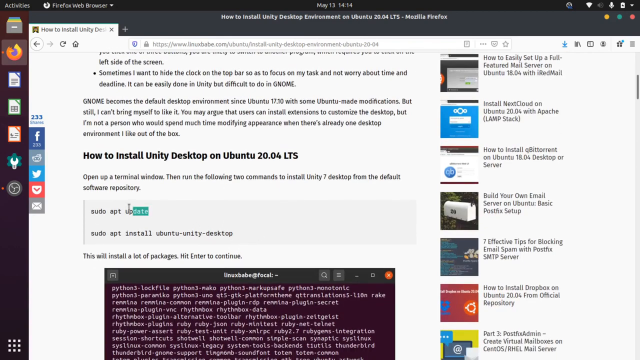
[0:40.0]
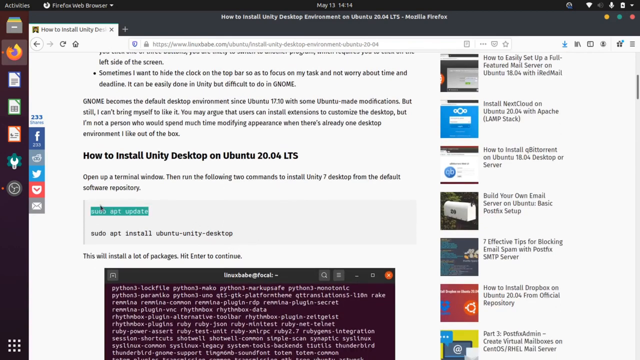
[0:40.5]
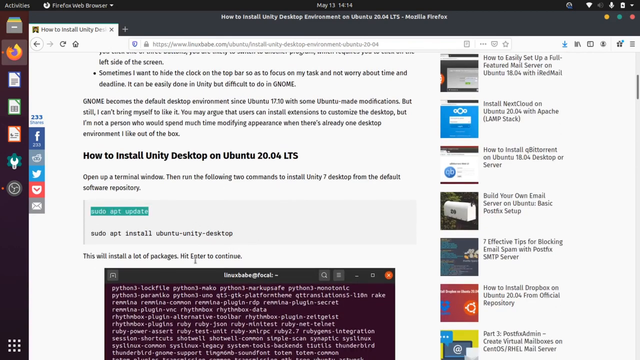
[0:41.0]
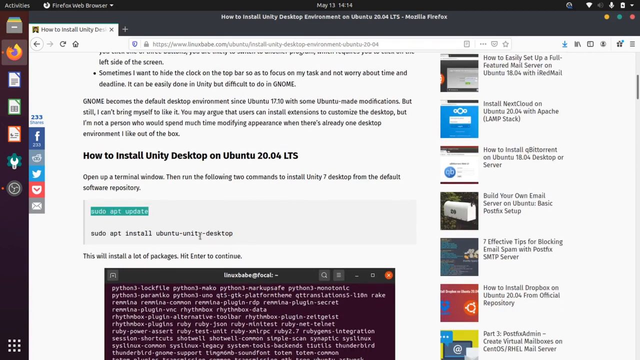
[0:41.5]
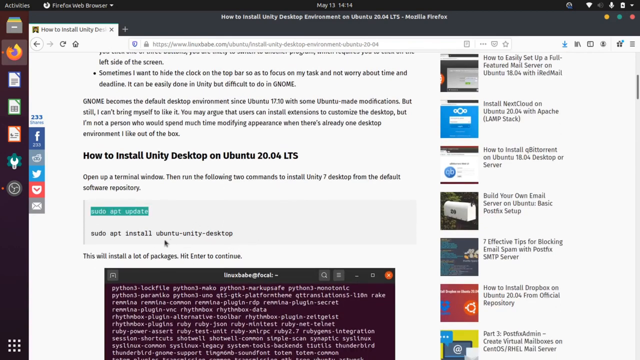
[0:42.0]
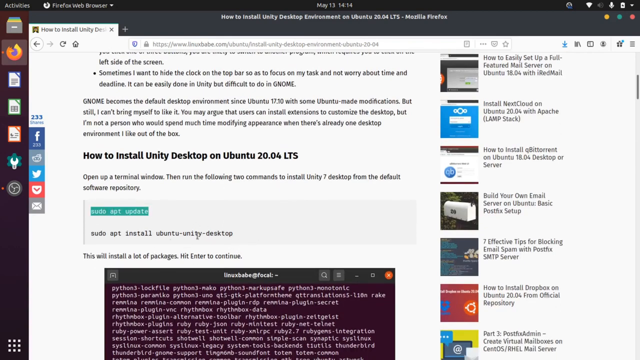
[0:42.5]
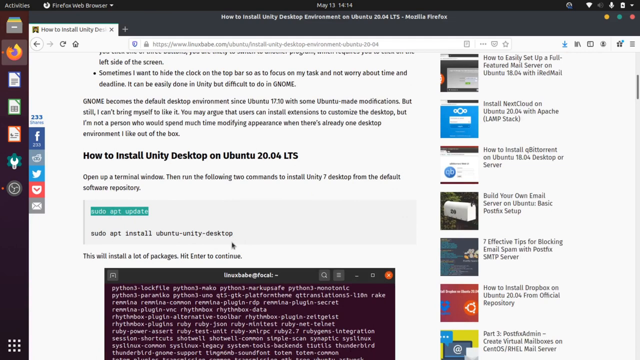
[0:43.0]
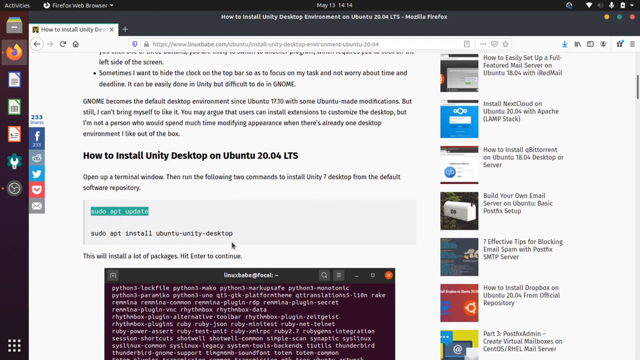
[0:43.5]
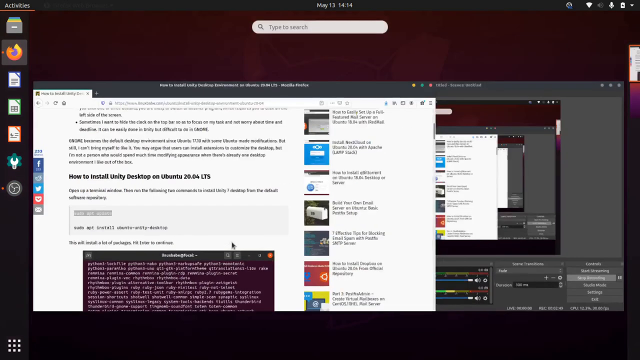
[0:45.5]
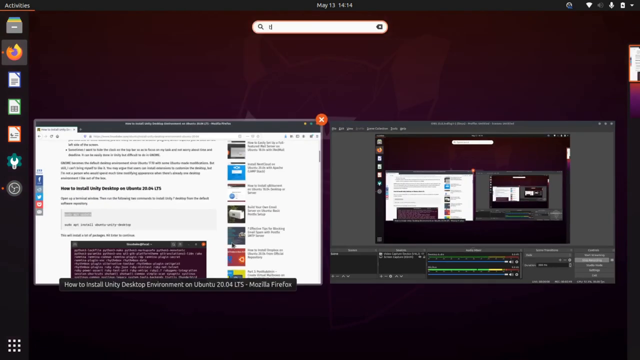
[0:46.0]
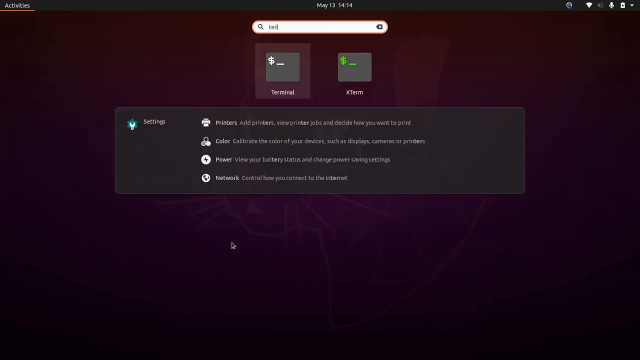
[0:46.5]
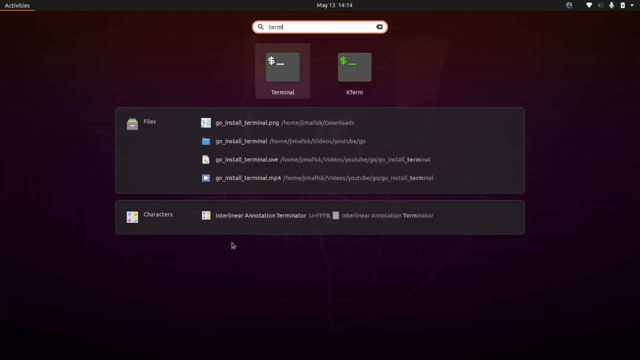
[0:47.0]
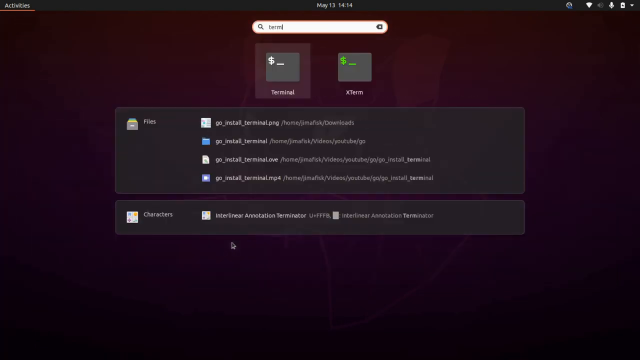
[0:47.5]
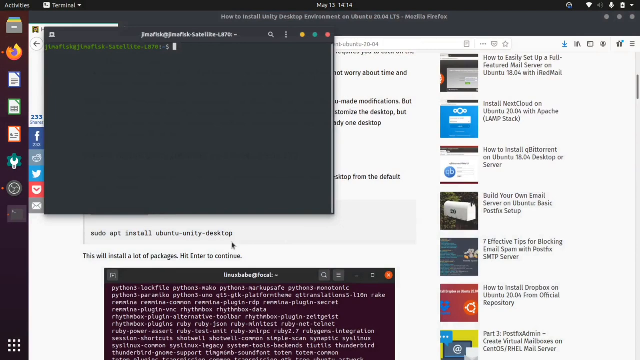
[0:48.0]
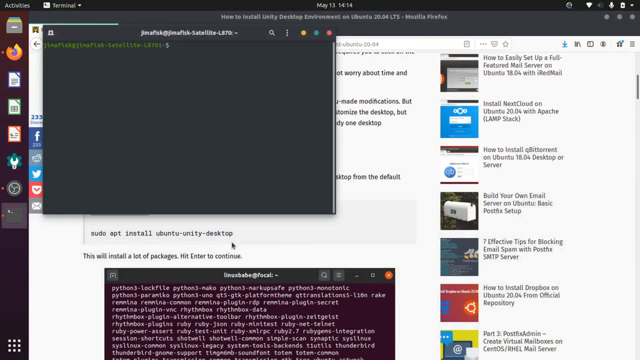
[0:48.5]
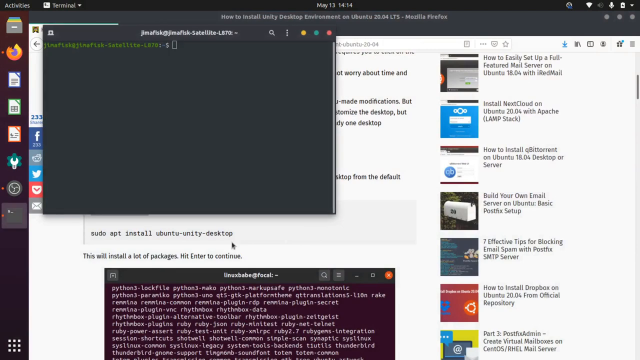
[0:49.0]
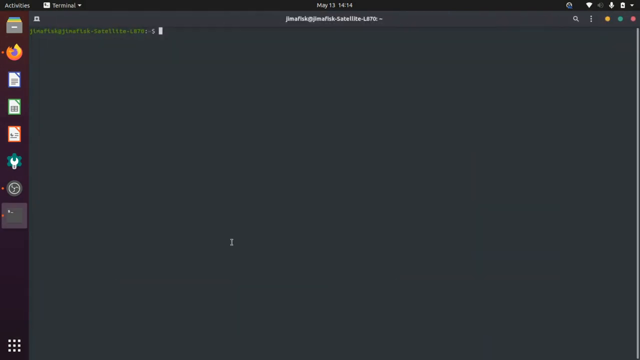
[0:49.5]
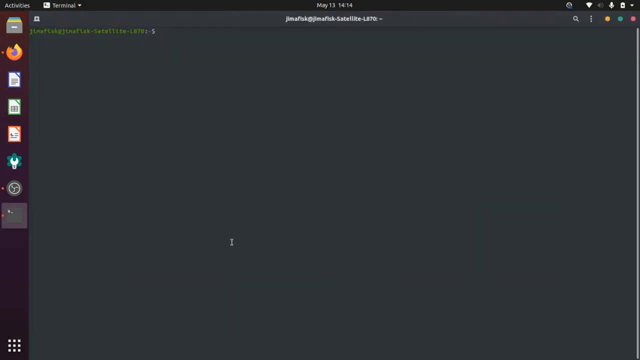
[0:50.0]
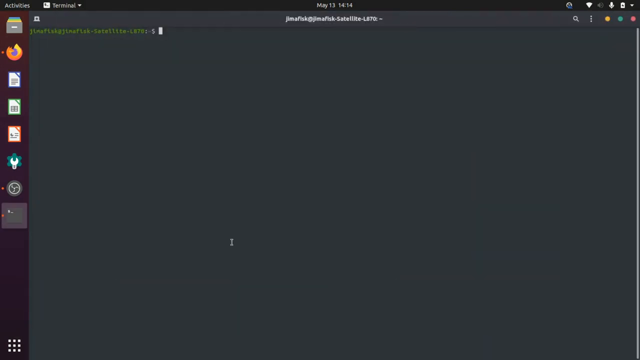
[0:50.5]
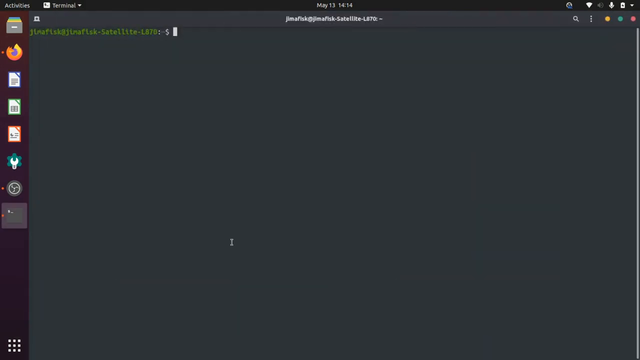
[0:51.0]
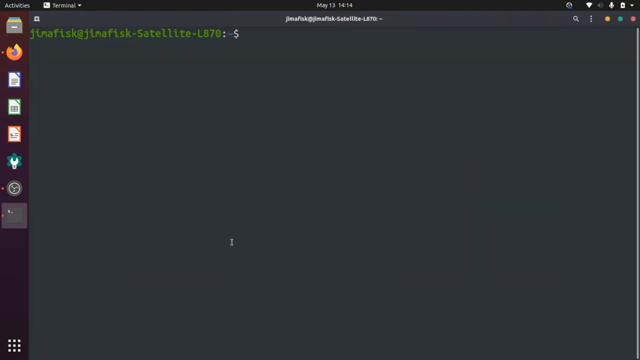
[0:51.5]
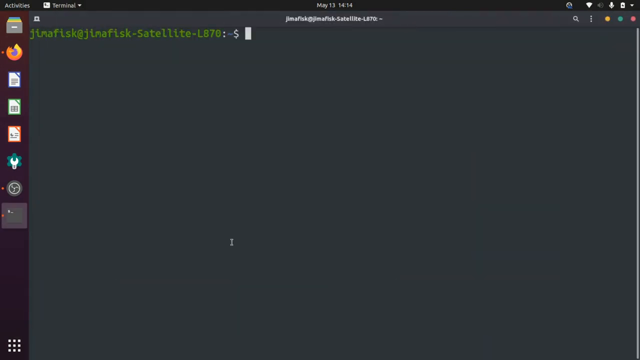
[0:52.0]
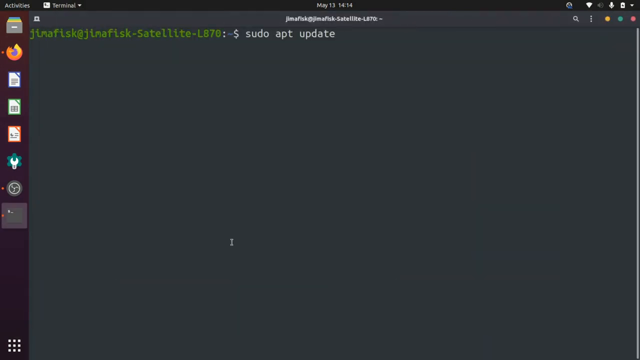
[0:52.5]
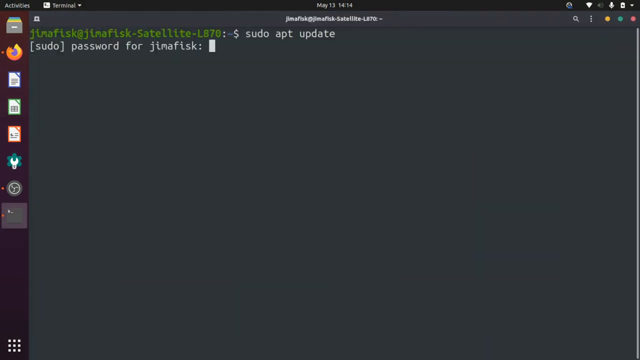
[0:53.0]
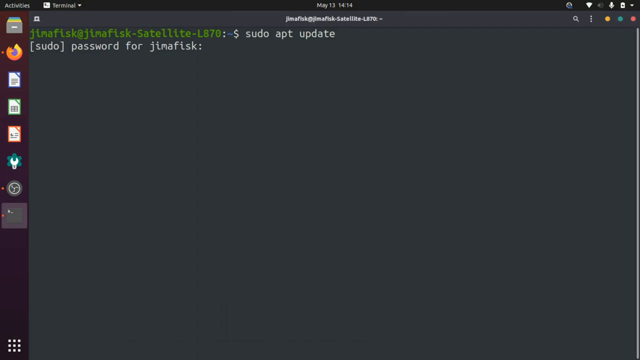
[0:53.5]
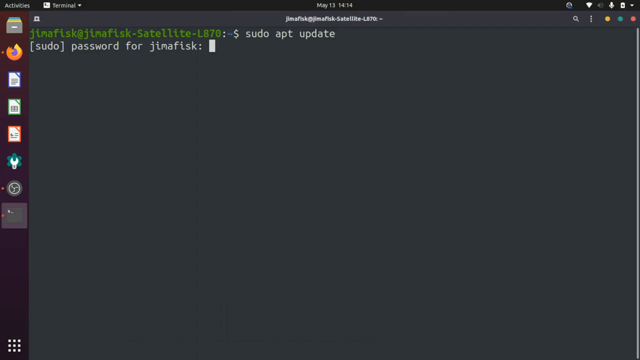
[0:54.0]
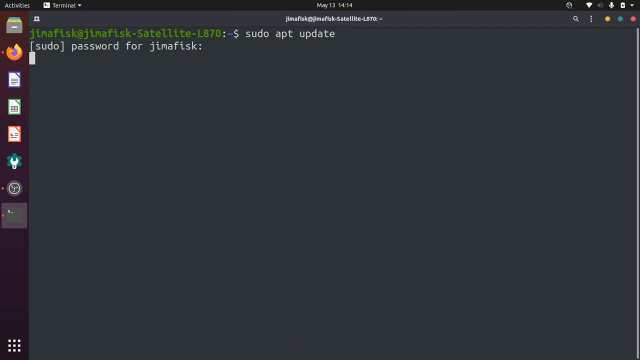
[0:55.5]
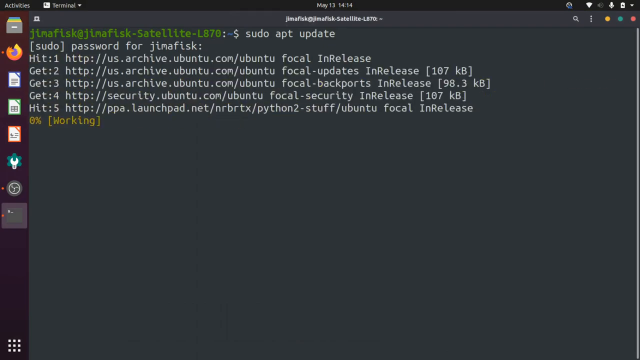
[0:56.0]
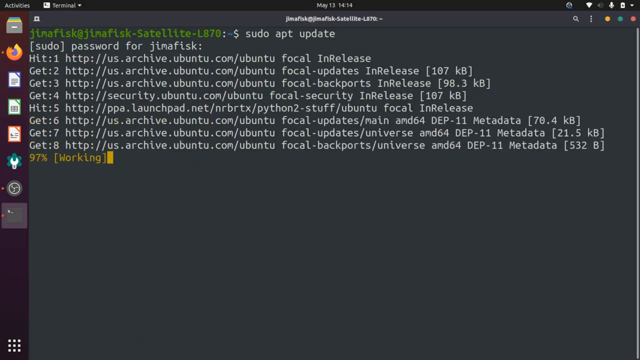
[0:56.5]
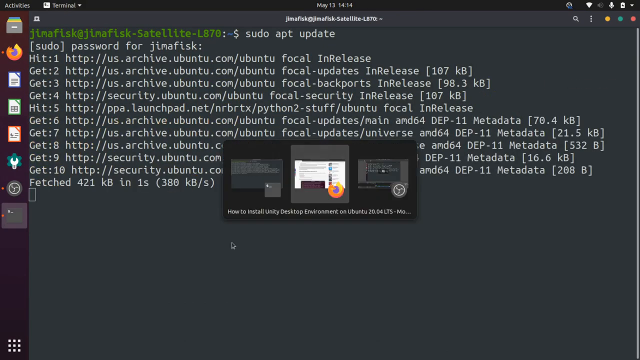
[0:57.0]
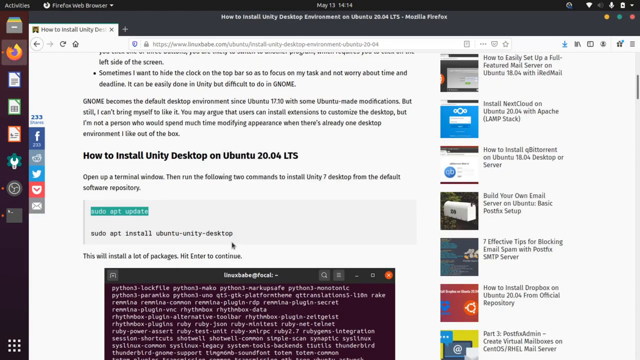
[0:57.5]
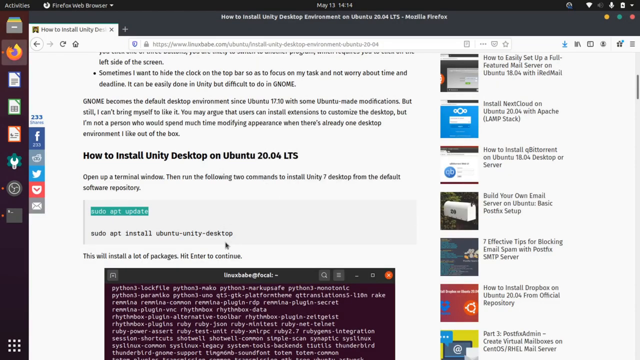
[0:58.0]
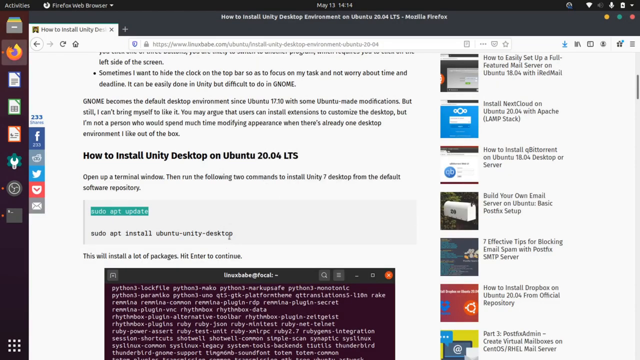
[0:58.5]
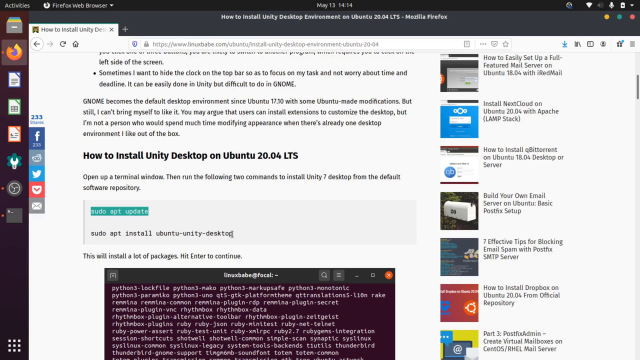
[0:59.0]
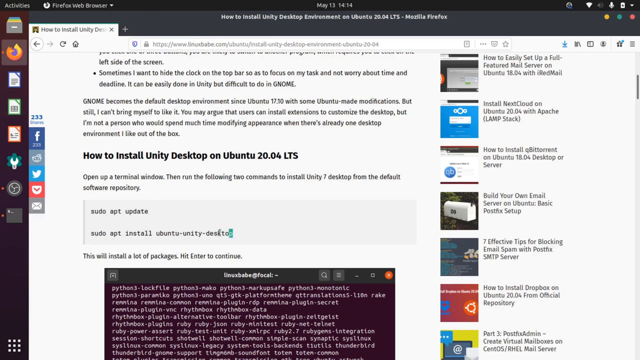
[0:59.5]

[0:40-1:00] A web page shows the article "How to Install Unity Desktop Environment on Ubuntu 20.04 LTS Mozilla Firefox." On the right are seven links to PC information articles, each with a photograph and description. On the left of the page are links to Facebook, Twitter, email, Gmail, and Reddit. A bar at the extreme left holds shortcuts: a folder at the top, what appears to be one for settings, one for Mozilla Firefox, and three in the middle for pages. At the bottom is a pop-up box with code in it. The cursor highlights text in a section just above the code, which opens two pages at once. Then another code pop-up box appears with a cursor and green code, and code continues to be written very fast.